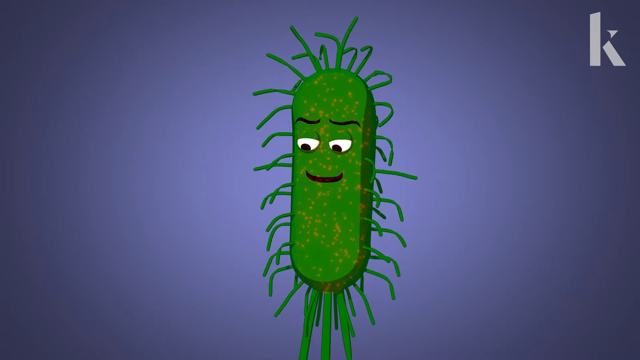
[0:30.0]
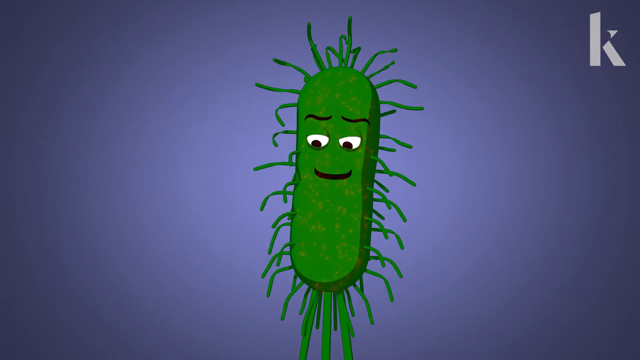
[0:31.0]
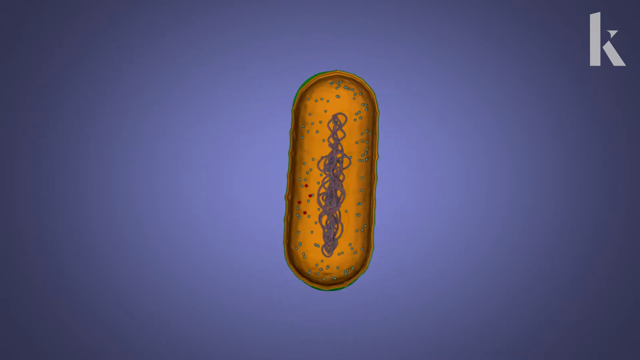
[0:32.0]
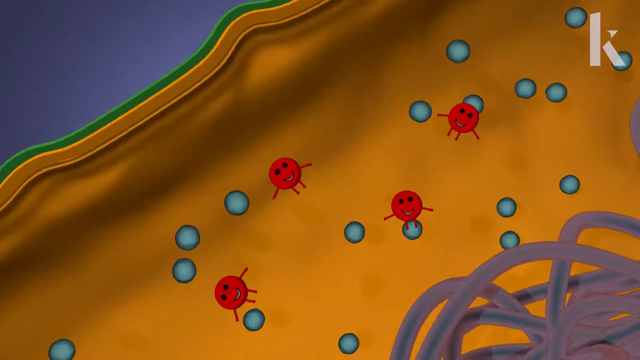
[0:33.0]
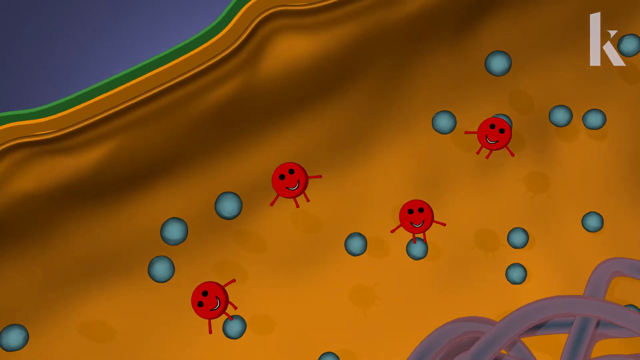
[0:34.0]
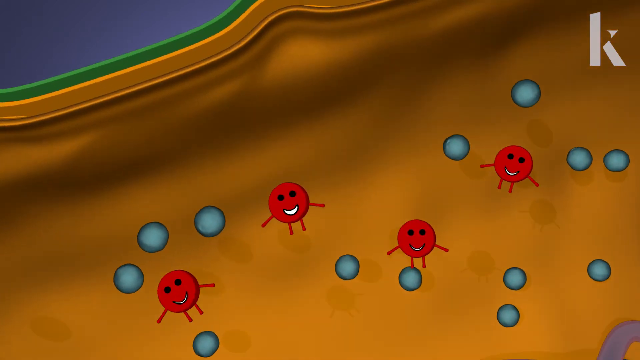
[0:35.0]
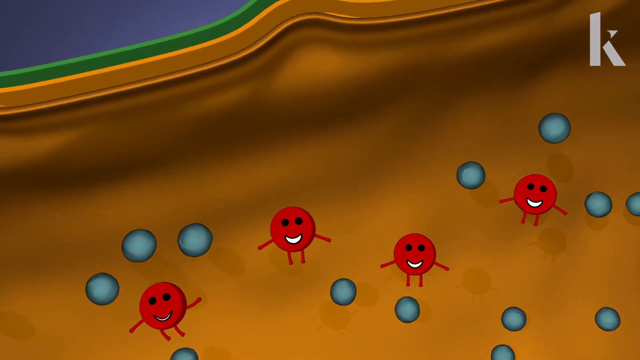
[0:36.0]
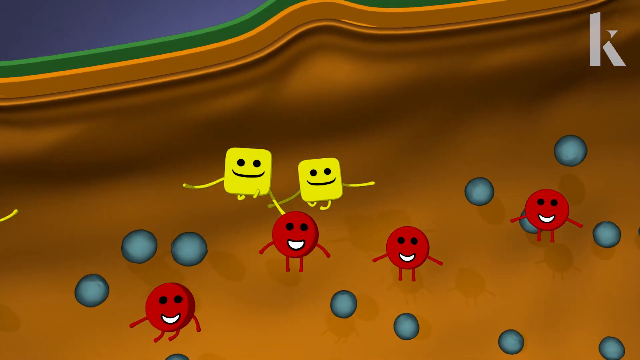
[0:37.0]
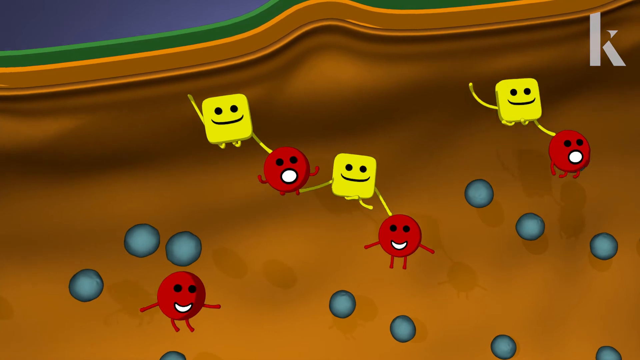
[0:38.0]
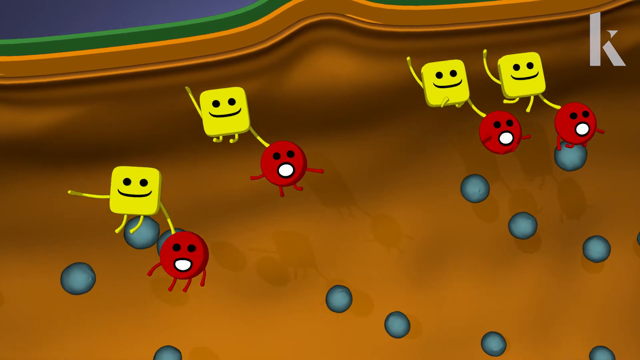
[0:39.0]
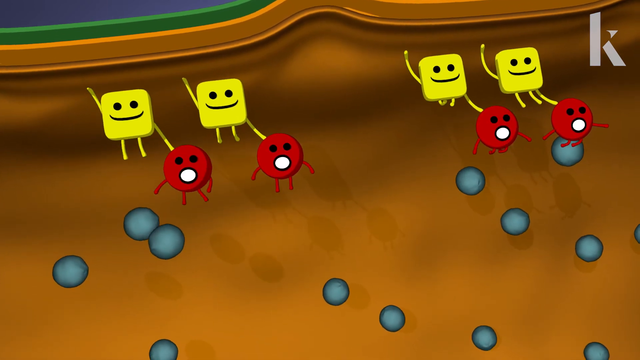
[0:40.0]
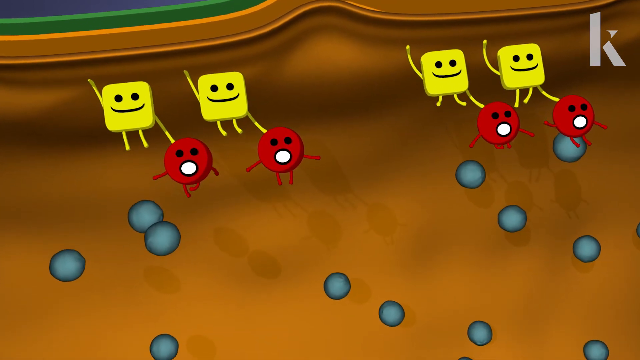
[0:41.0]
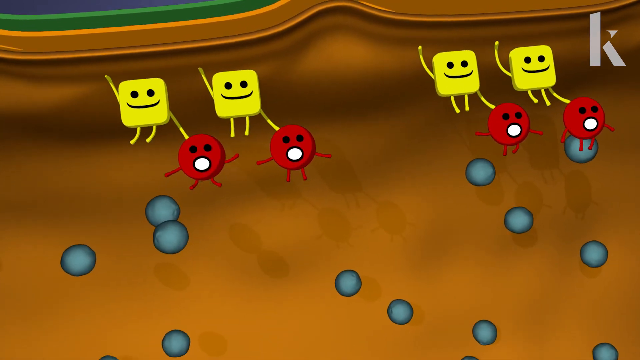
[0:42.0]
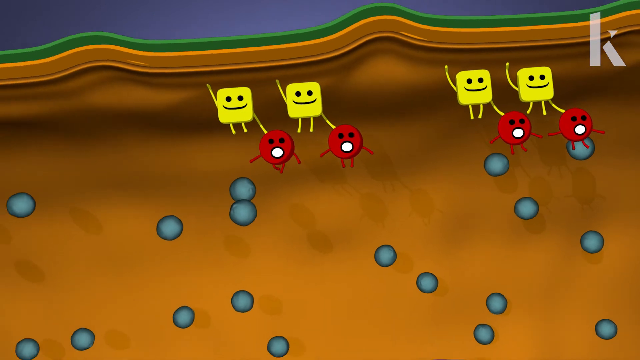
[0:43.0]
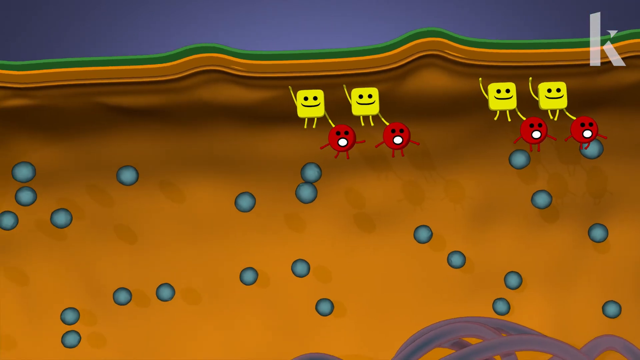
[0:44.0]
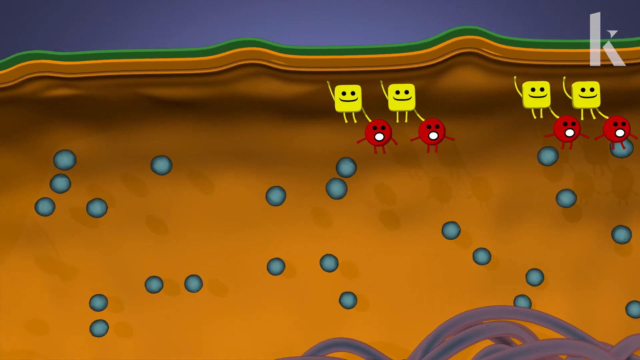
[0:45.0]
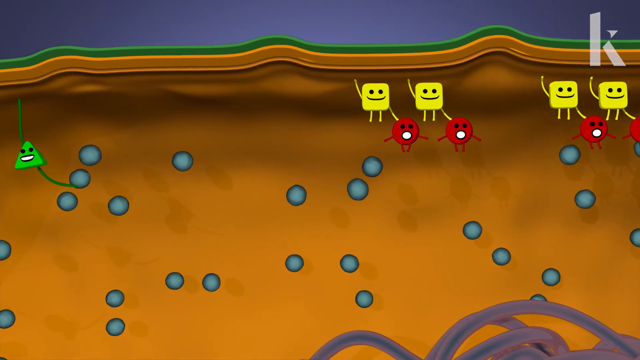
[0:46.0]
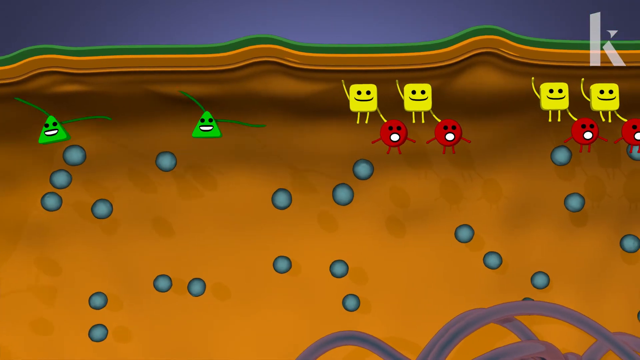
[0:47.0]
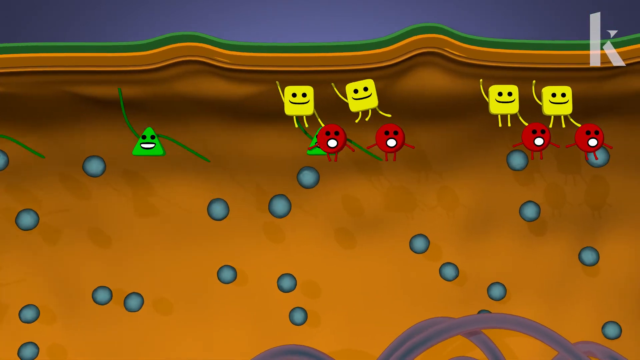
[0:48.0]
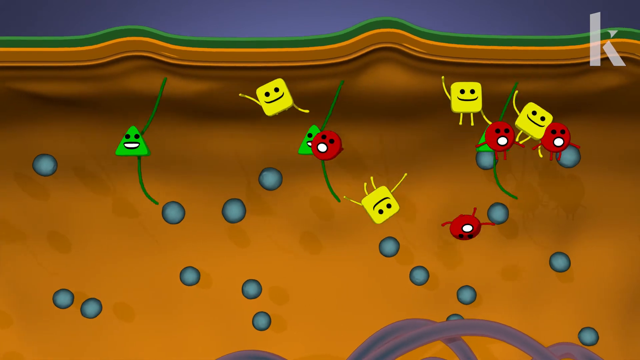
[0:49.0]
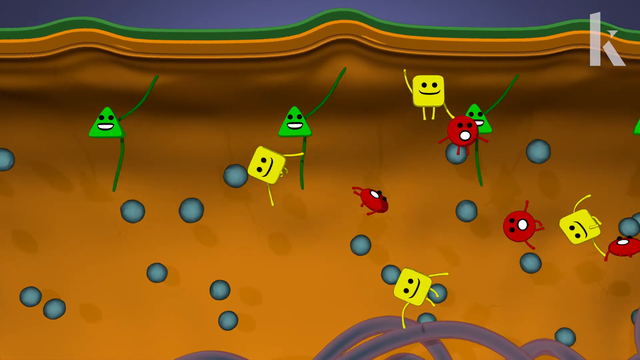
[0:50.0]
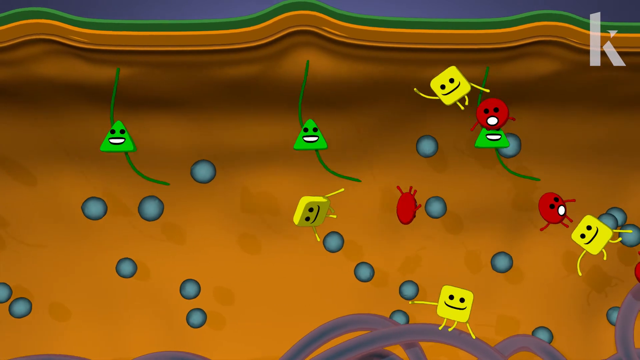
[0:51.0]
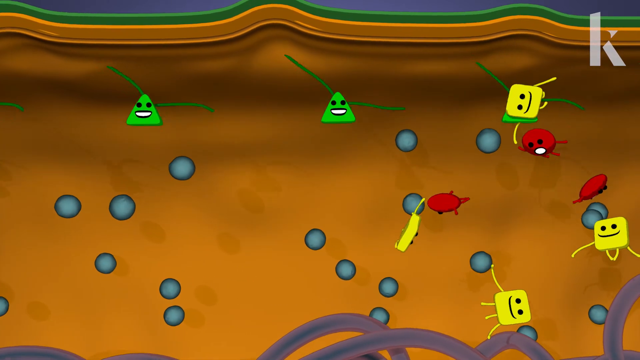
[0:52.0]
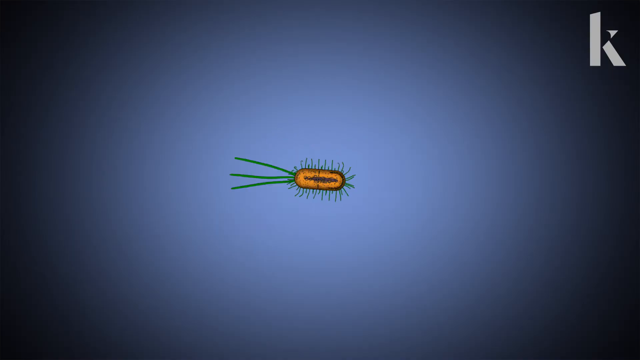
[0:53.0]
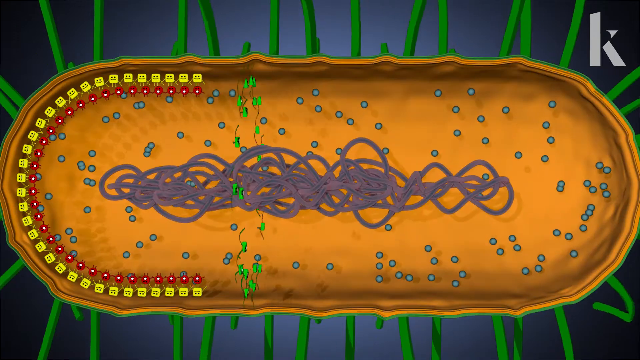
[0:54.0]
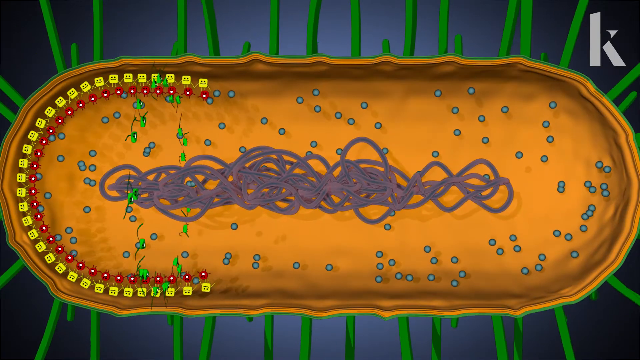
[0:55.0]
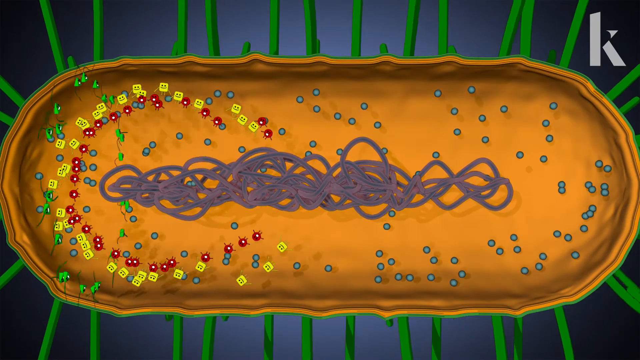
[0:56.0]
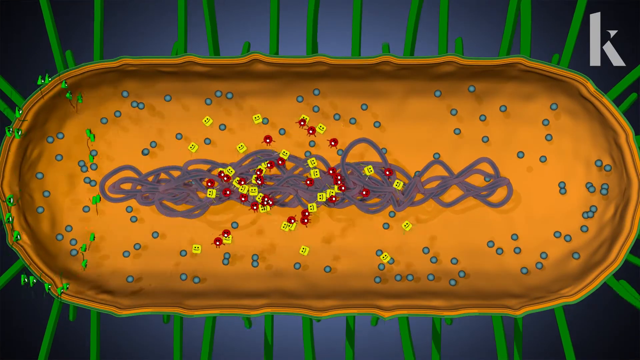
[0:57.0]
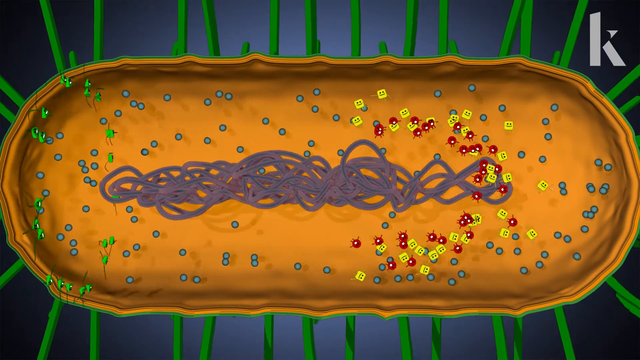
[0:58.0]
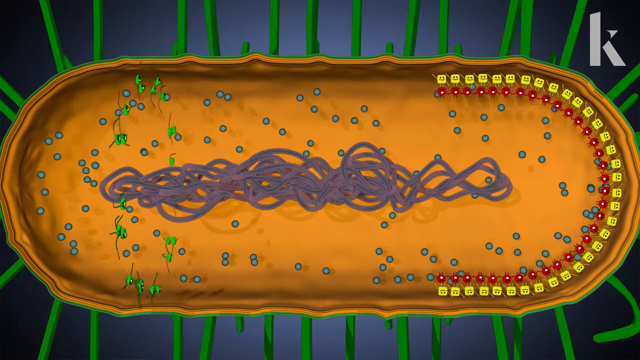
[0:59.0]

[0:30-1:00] A zoomed-out view of the bacterium gives way to a zoomed-in view of its inside. Four red circle-shaped animations with smiley faces appear. Then four yellow square-shaped smiley-face animations hold on to the red circles. Next, green triangle-shaped smiley-face animations pass through the yellow ones. Once they do, the yellow ones, which were clinging to the wall inside the bacterium, fall and float inside it. In another zoomed-out view, the green ones pass through the yellow ones once again inside the body of the bacterium. The yellow and red ones then move to the right side of the bacterium, where they alternate. The green ones come back and chase the yellow ones once again, and the yellow and red ones move to the left side. The yellow, green and red shapes go back and forth inside the bacterium.